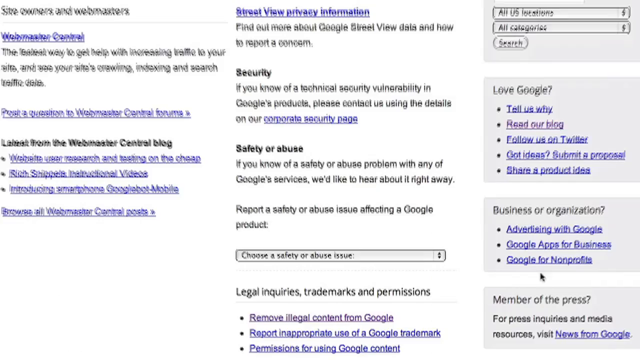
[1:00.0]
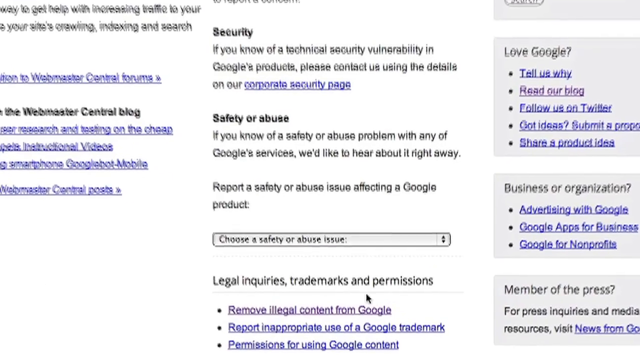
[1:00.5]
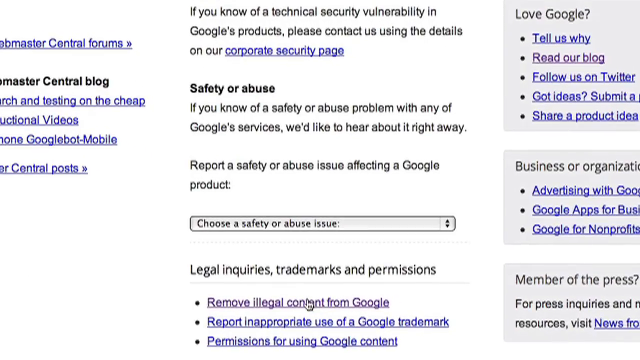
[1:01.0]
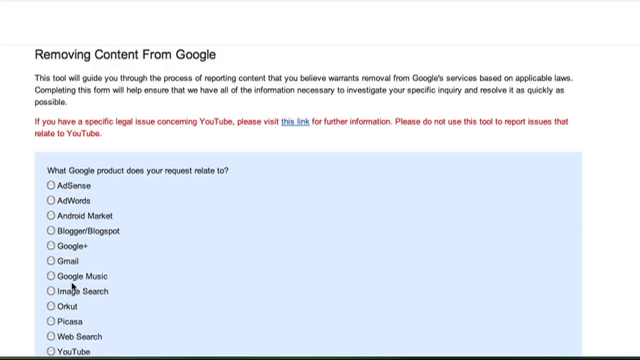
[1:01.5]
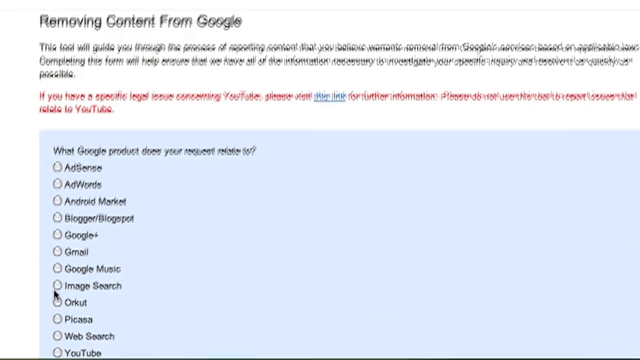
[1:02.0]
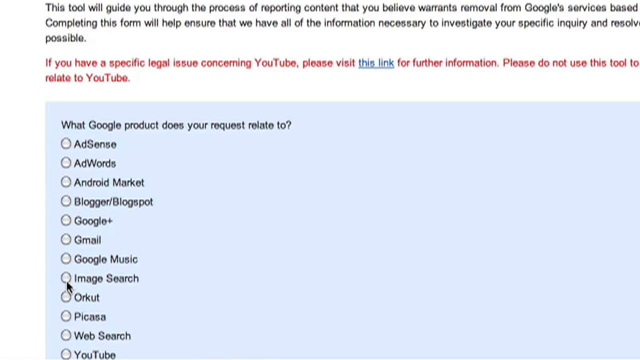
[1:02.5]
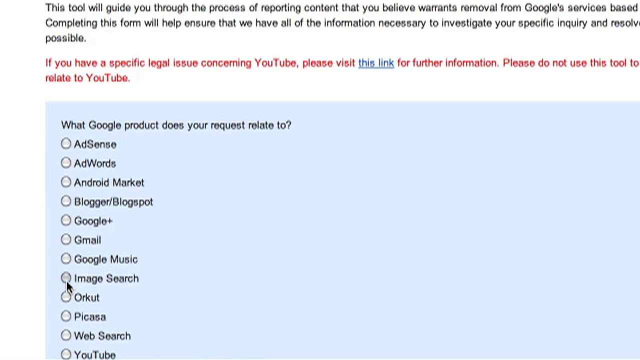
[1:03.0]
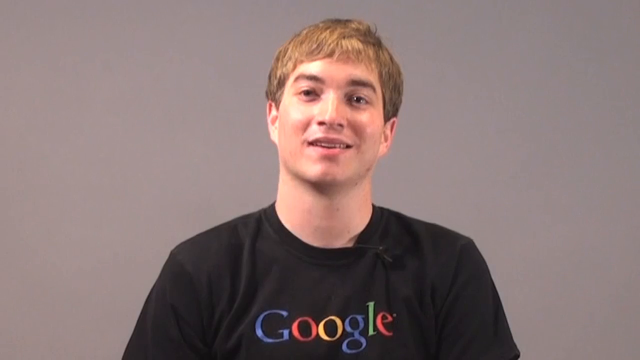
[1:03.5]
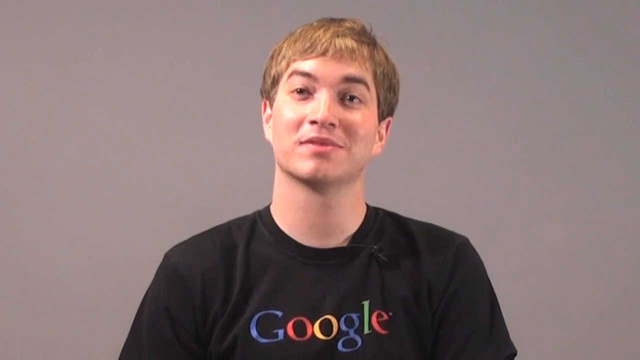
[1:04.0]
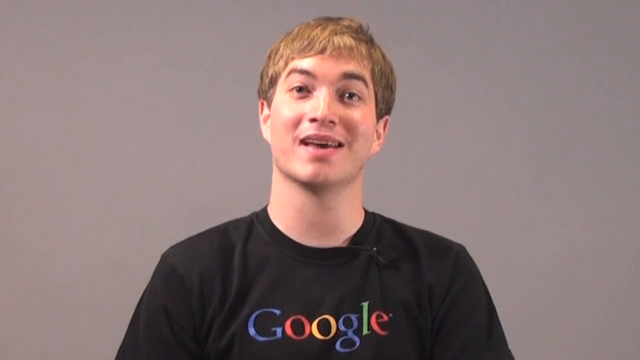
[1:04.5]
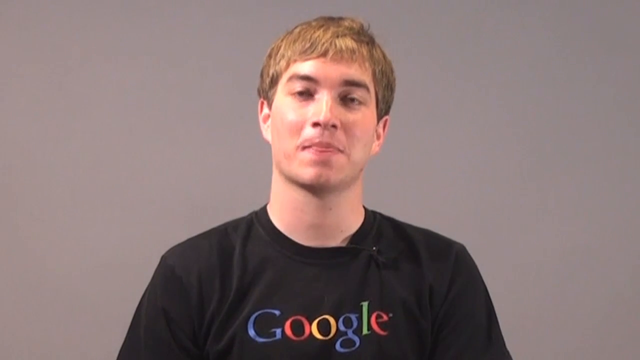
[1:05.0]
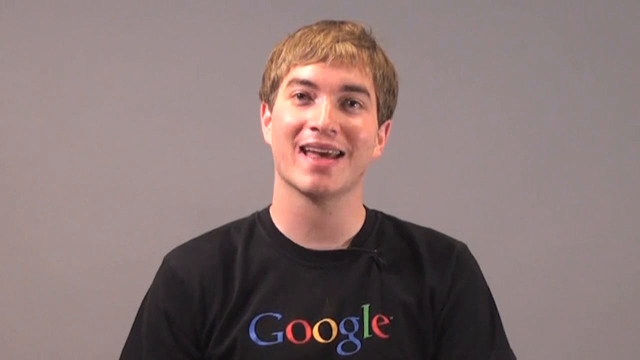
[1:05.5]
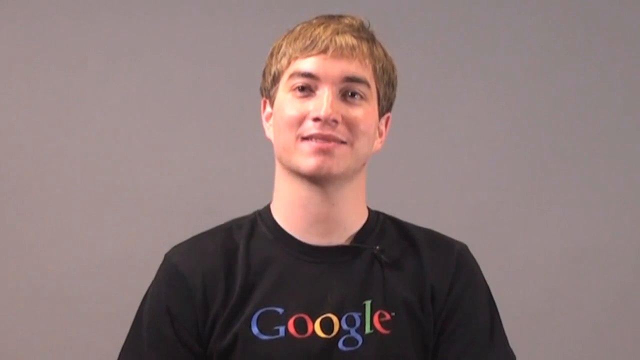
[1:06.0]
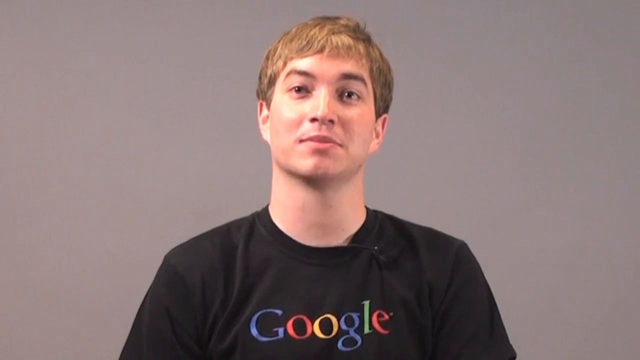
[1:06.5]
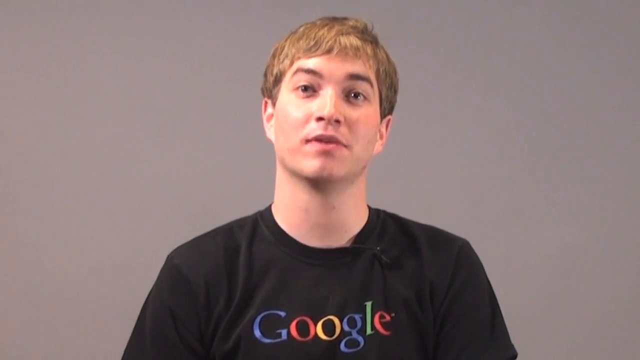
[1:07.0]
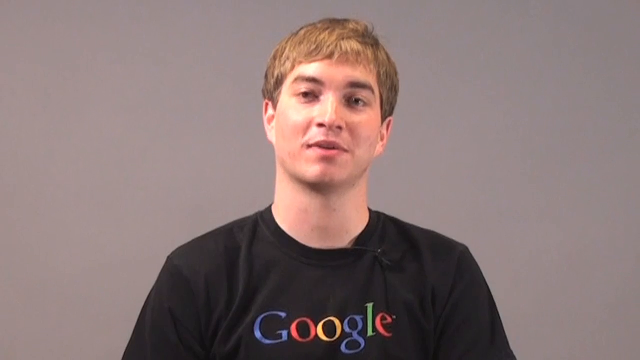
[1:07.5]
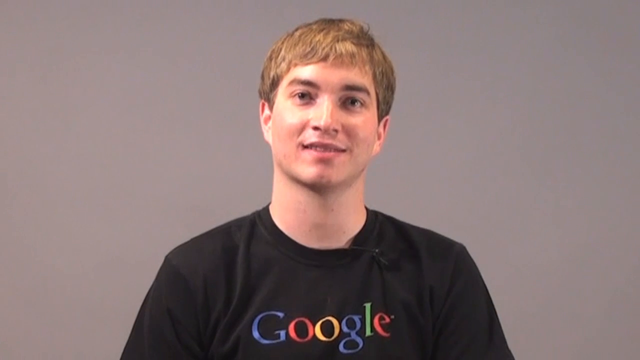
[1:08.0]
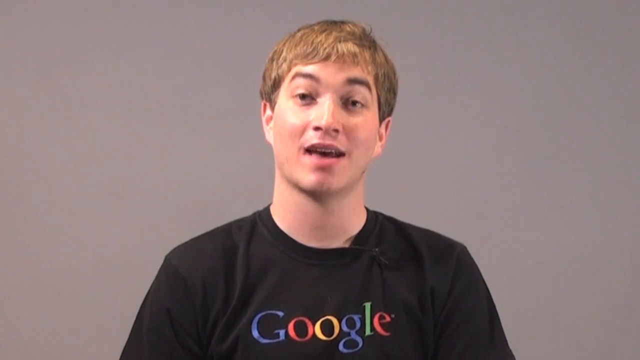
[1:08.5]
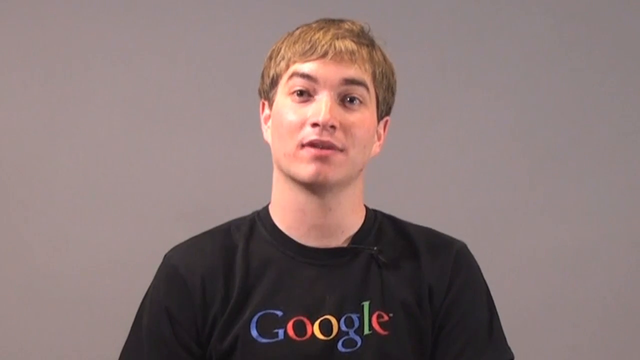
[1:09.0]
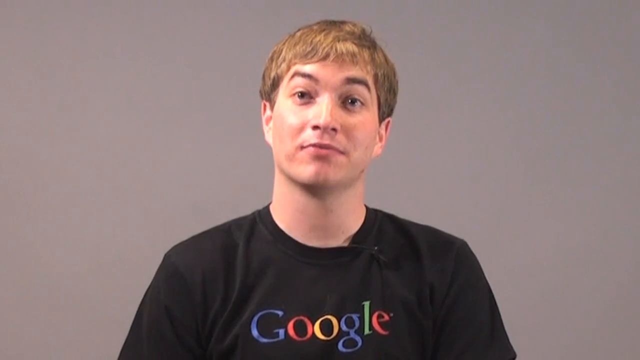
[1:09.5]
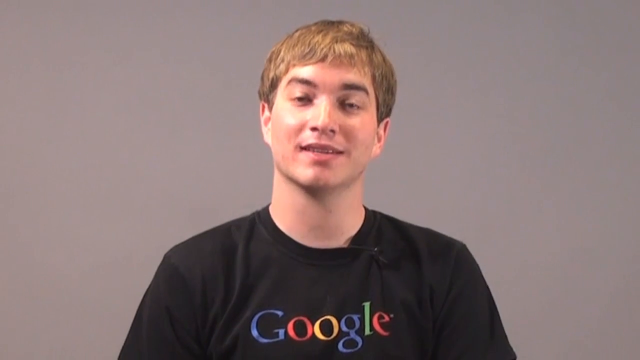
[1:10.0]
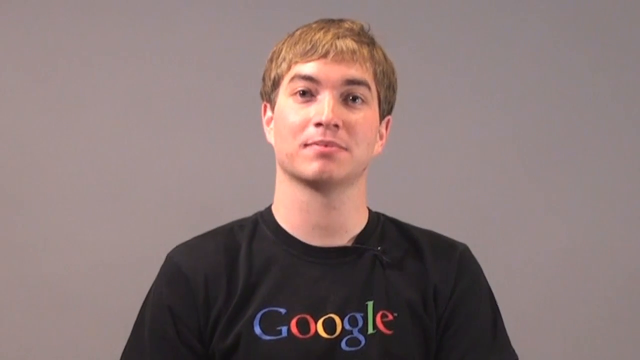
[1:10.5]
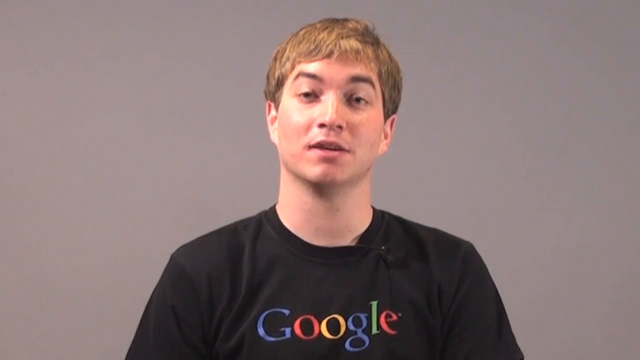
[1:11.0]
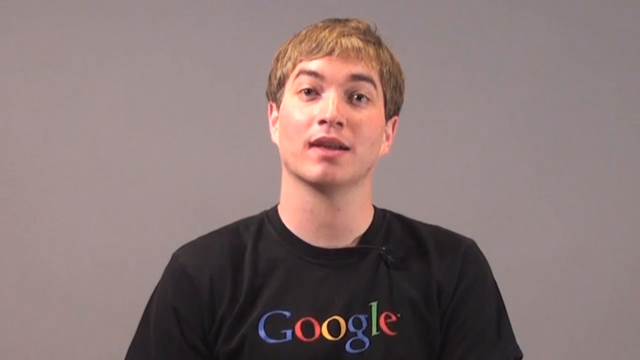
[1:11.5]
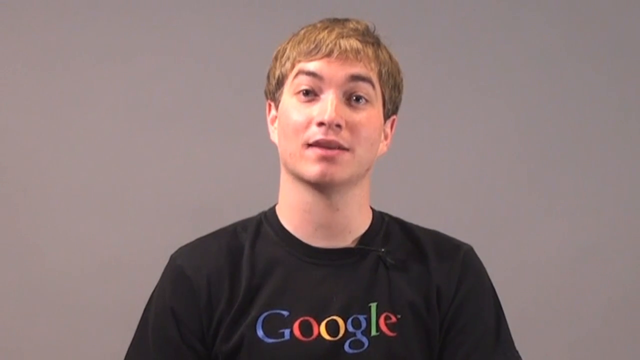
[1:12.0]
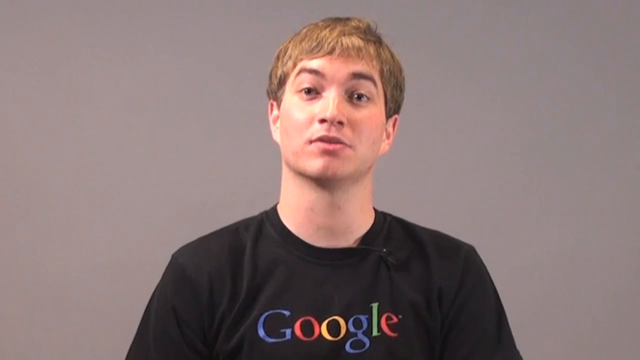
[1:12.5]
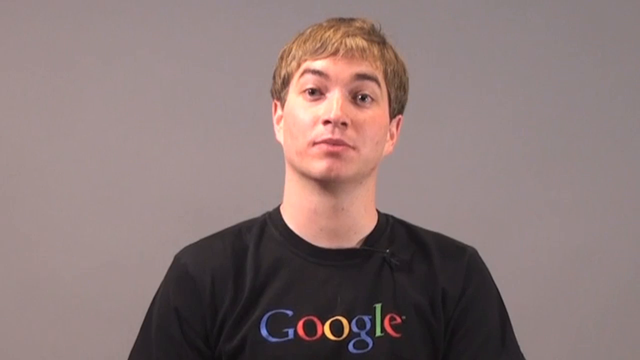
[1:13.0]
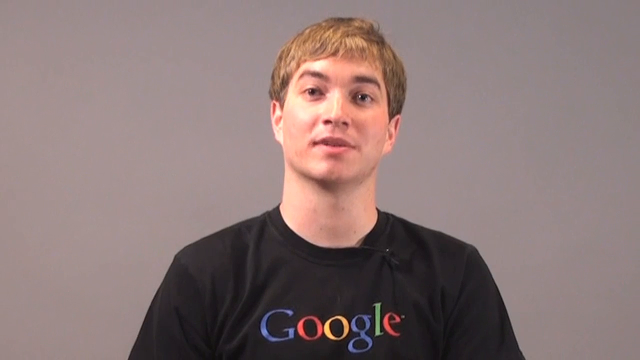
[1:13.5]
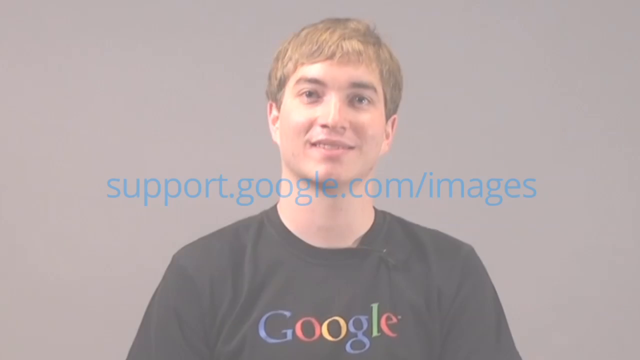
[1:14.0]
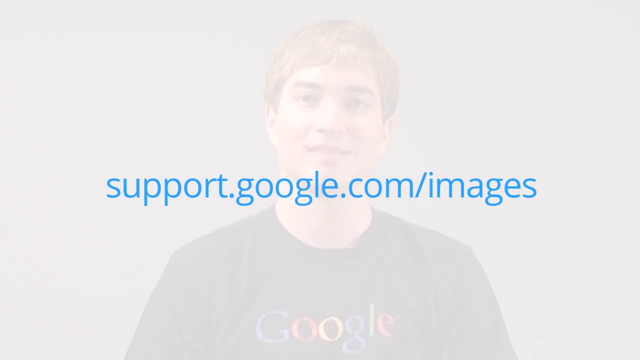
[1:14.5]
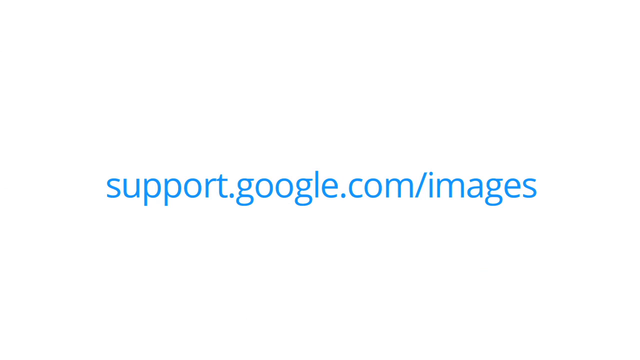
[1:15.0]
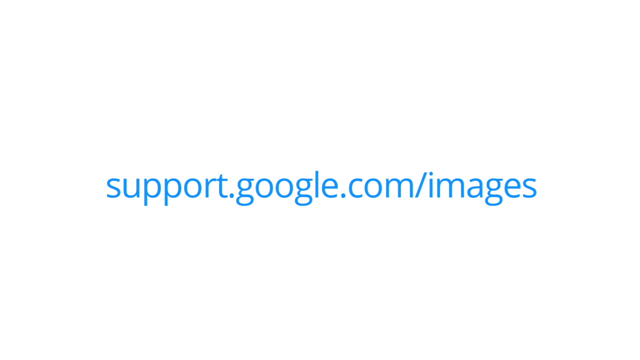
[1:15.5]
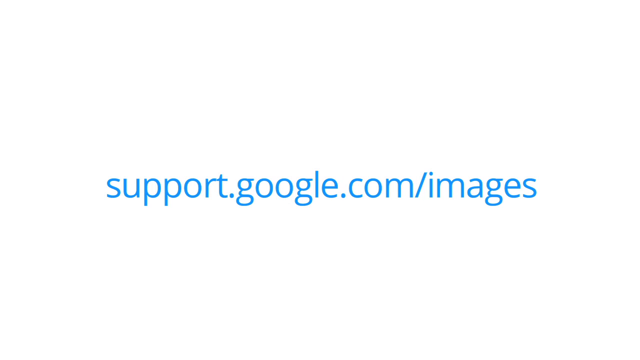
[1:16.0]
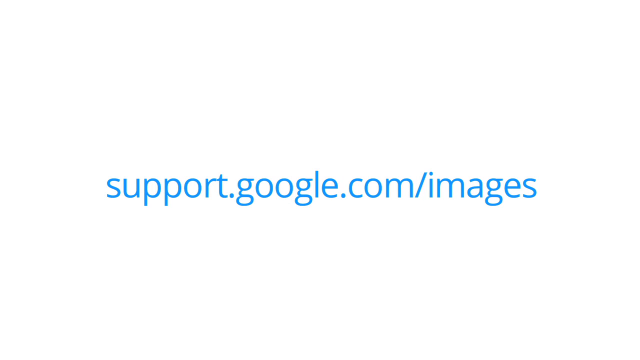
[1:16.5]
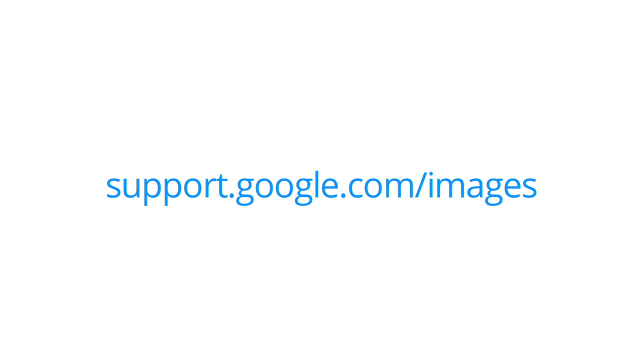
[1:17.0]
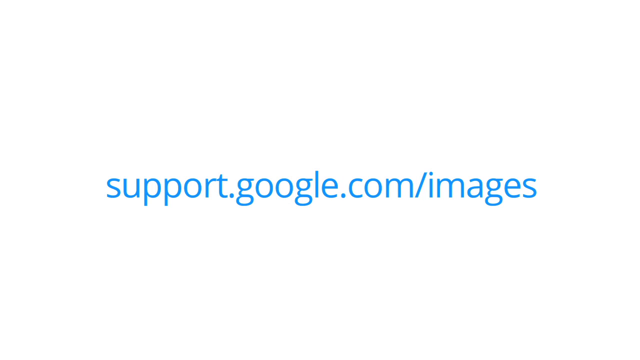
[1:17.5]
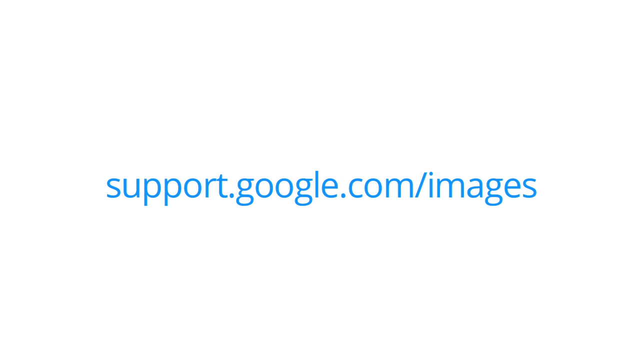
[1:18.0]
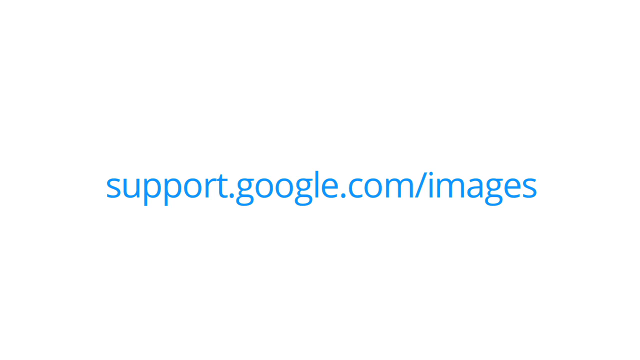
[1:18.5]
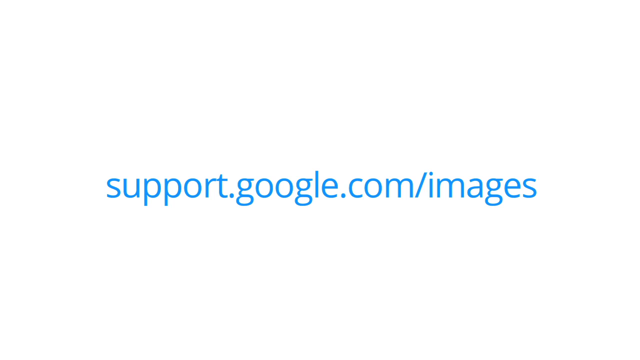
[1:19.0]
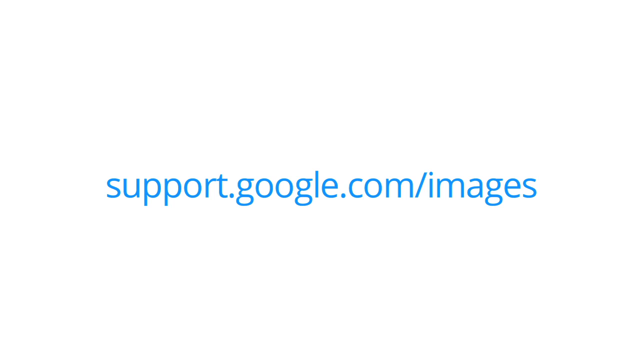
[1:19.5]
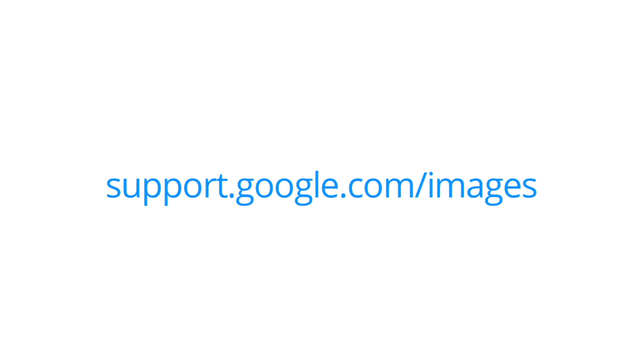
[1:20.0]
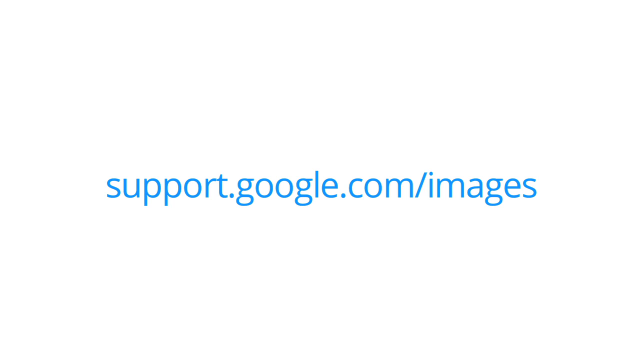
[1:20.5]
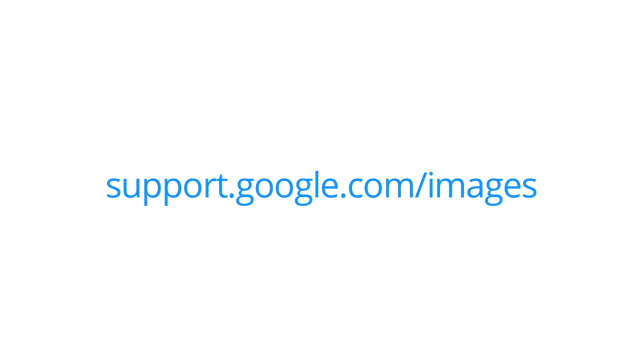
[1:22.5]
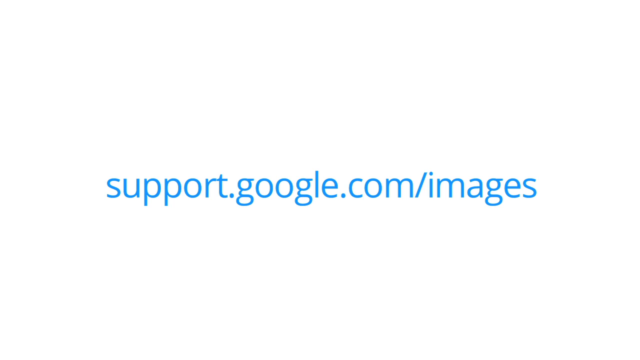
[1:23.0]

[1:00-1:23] The page zooms in towards a "legal enquiries, trademarks and permissions" section, and the cursor clicks on "remove content from Google". This brings up some text, followed by red text about YouTube that refers users to the relevant link for that content. Below it is a light blue box that reads "what Google product does your request refer to", followed by a list of Google products such as AdSense, AdWords, Android Market, Blogger, Google+, Gmail, Google Music and Image Search, each with its own radio button, all in black text. The cursor clicks on Image Search. The video then flips back to the man with dark blonde hair, who speaks and occasionally raises his eyebrows, with a friendly facial expression, looking very engaged. He ends with a smile and then fades out to a screen showing the support link for images on Google, which remains on screen for the rest of the video.